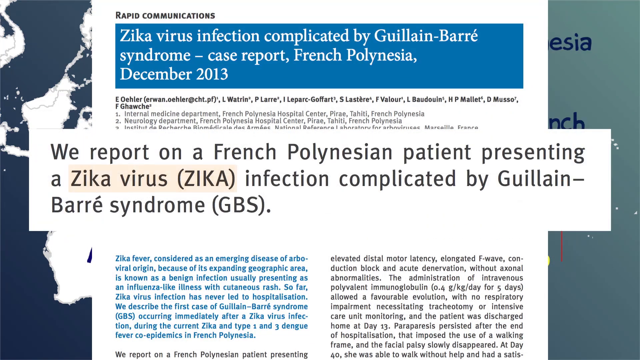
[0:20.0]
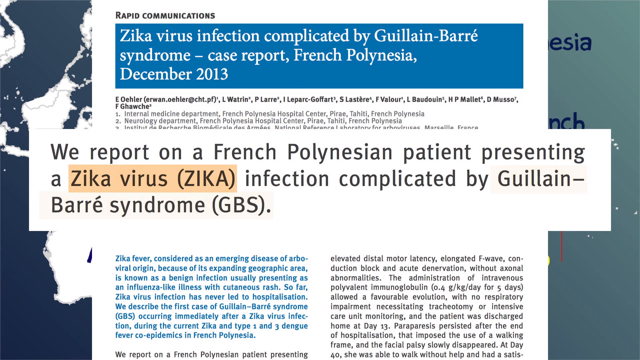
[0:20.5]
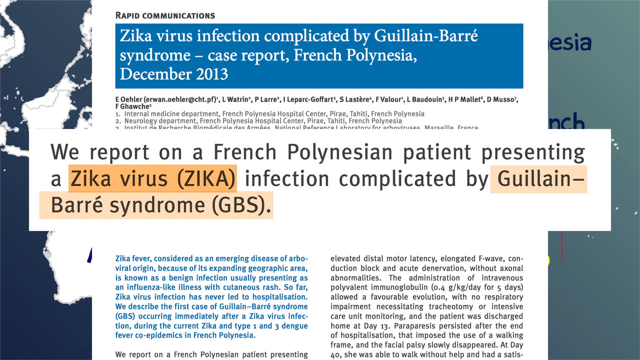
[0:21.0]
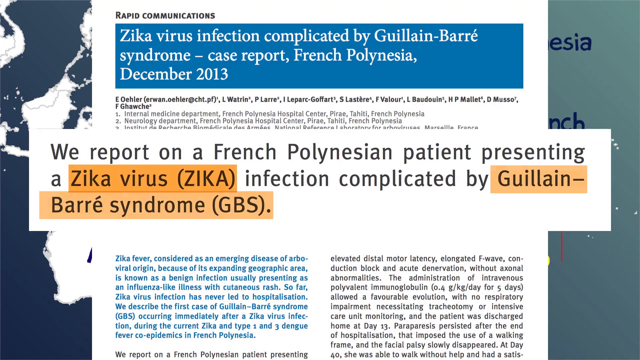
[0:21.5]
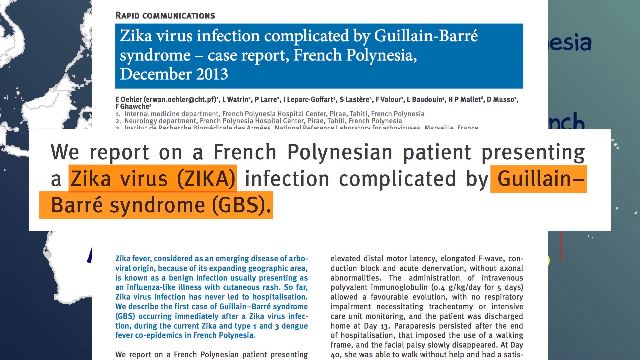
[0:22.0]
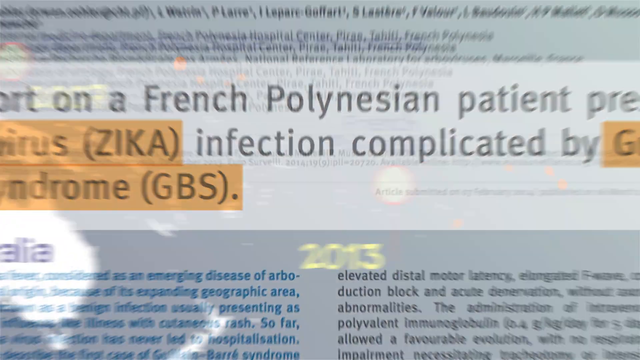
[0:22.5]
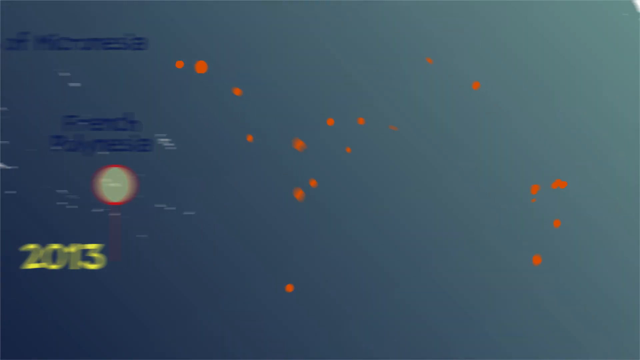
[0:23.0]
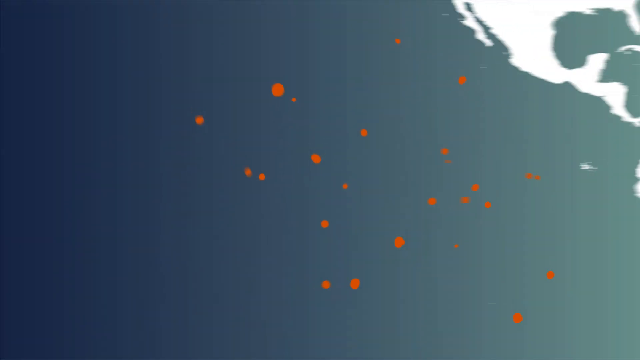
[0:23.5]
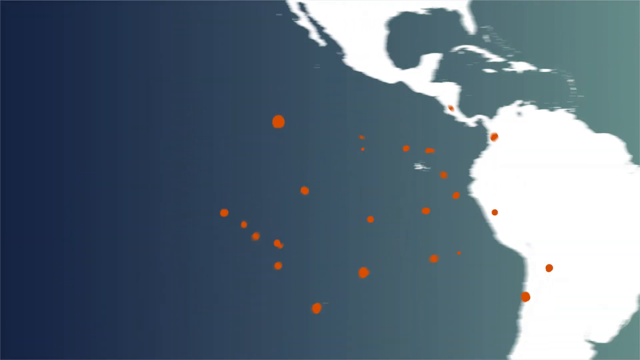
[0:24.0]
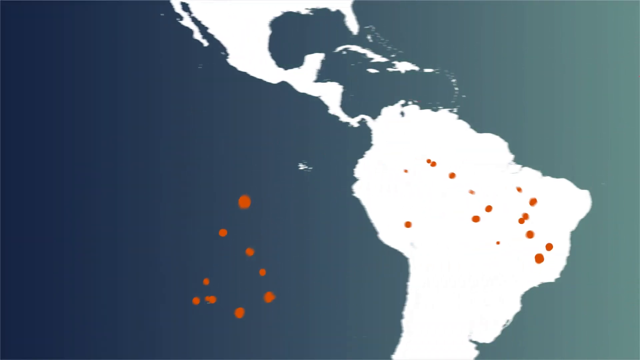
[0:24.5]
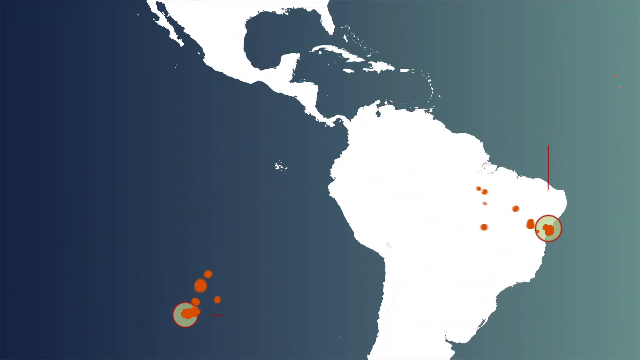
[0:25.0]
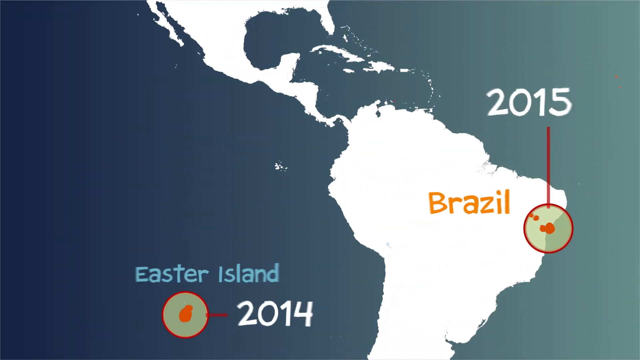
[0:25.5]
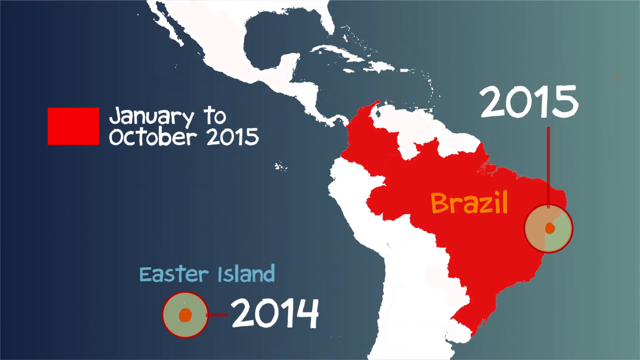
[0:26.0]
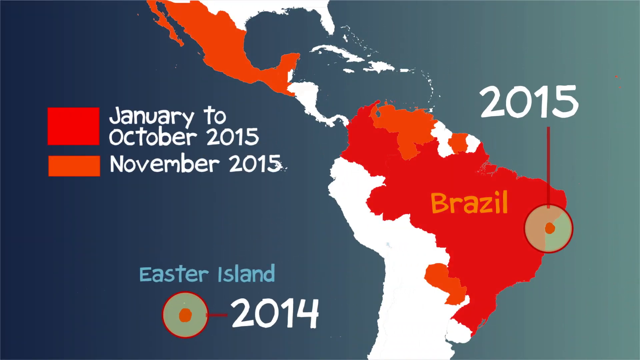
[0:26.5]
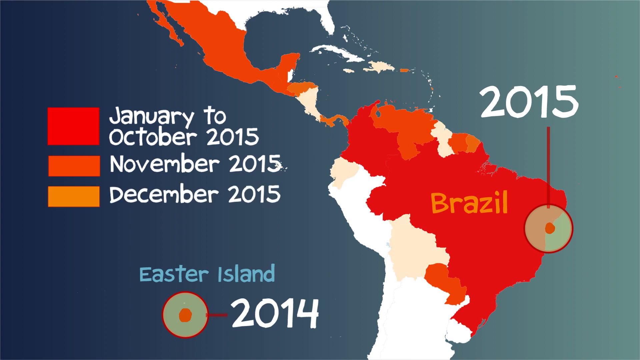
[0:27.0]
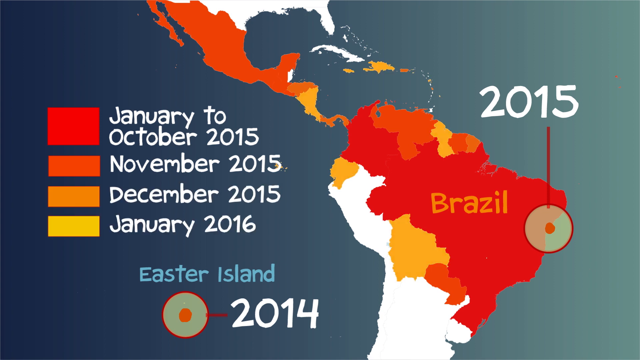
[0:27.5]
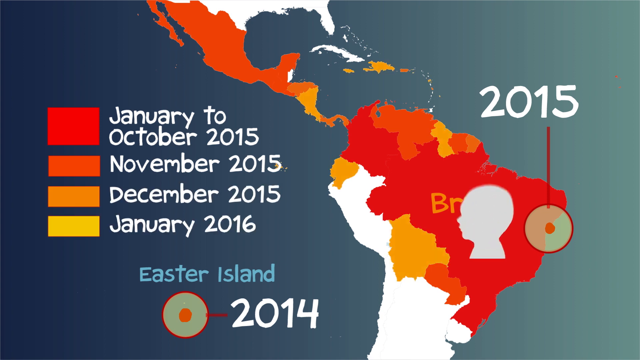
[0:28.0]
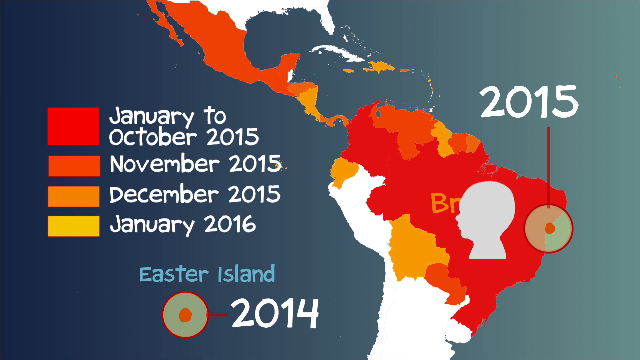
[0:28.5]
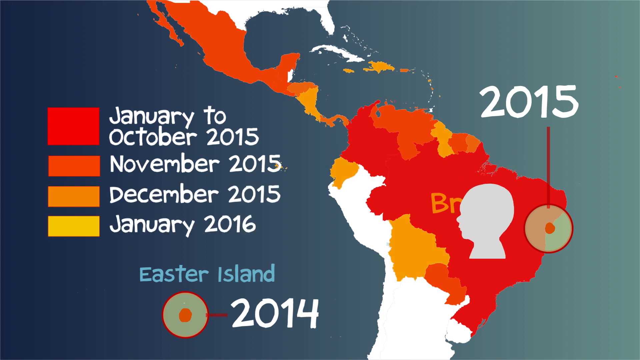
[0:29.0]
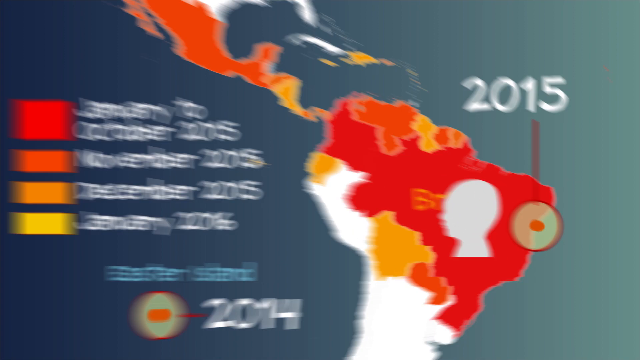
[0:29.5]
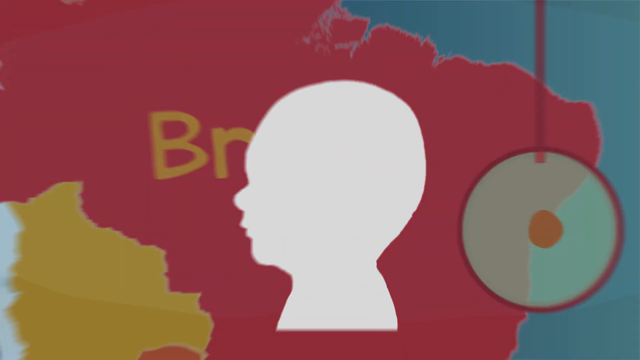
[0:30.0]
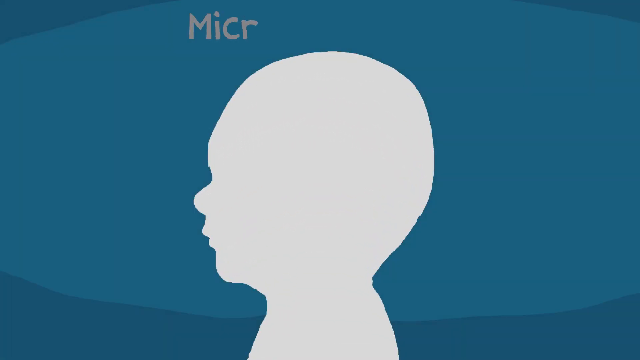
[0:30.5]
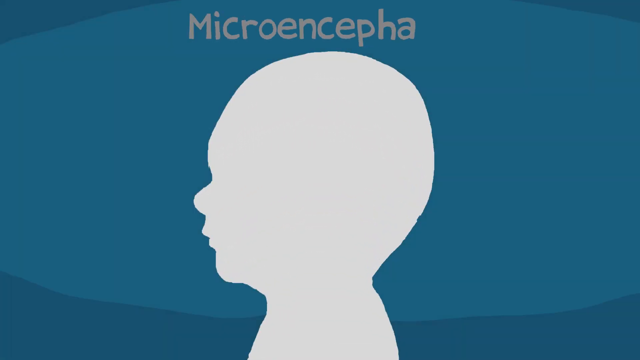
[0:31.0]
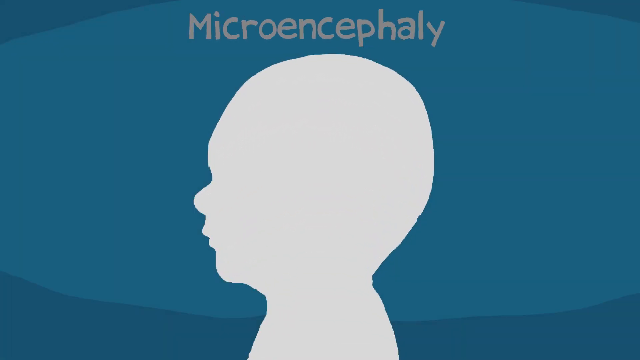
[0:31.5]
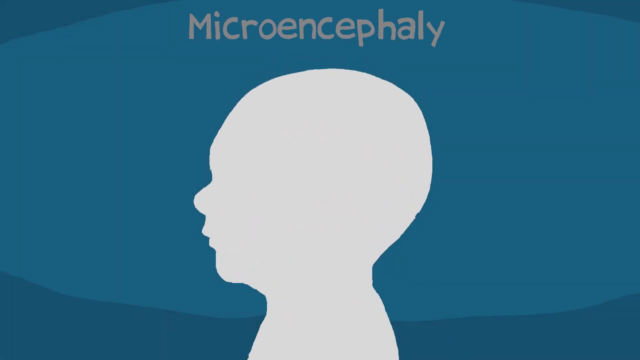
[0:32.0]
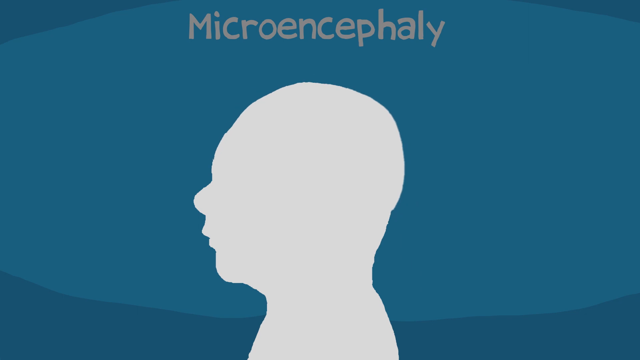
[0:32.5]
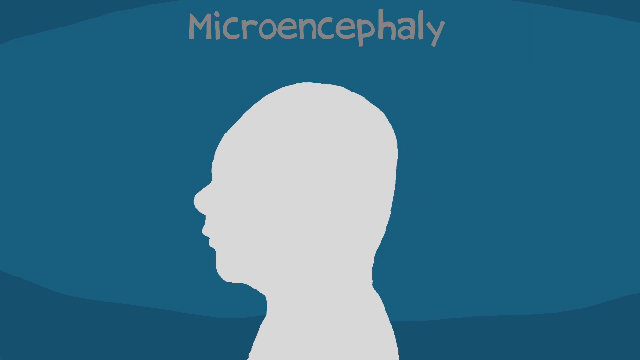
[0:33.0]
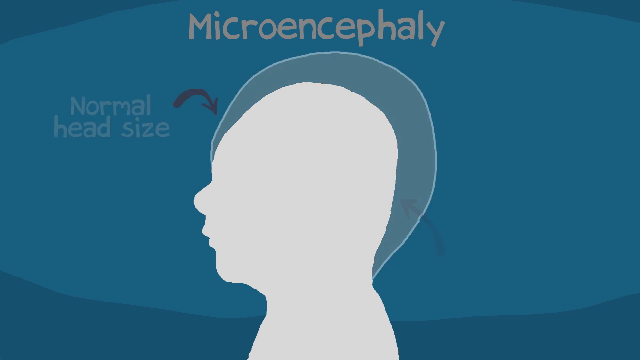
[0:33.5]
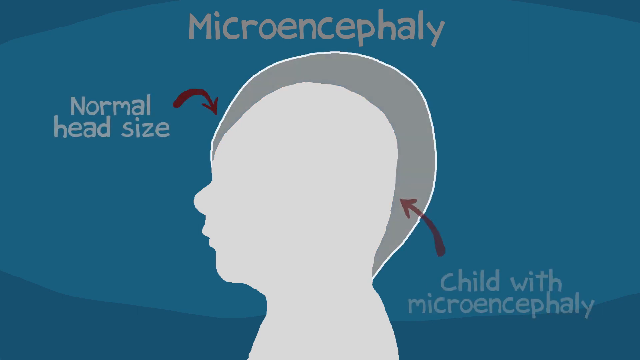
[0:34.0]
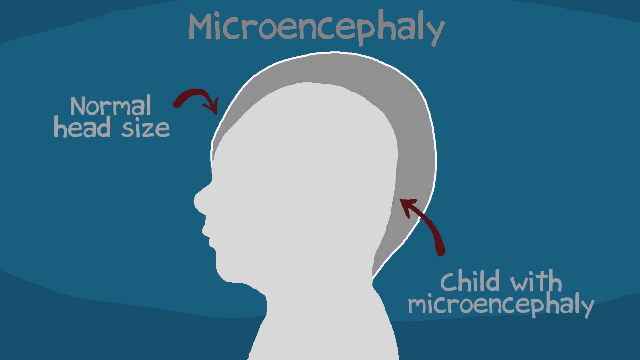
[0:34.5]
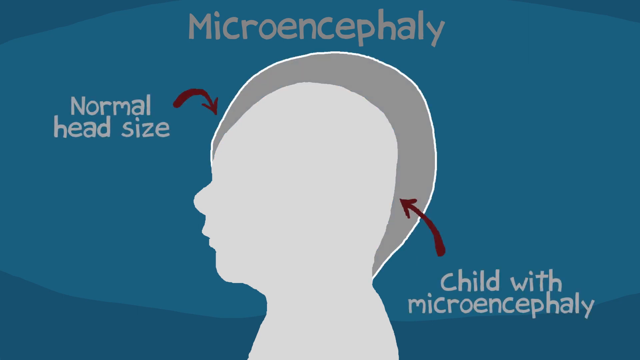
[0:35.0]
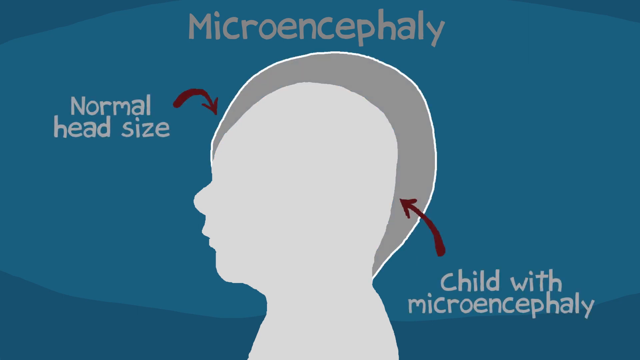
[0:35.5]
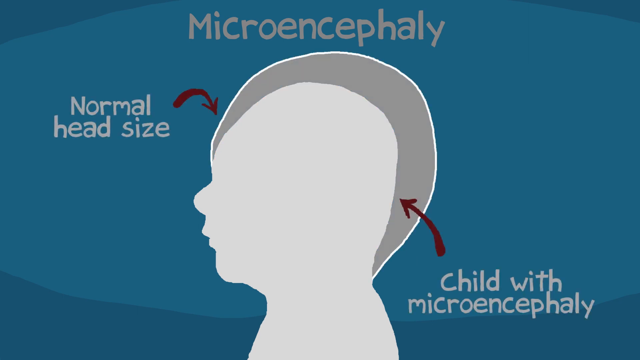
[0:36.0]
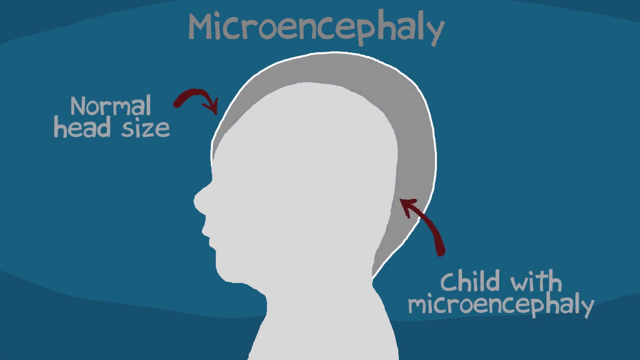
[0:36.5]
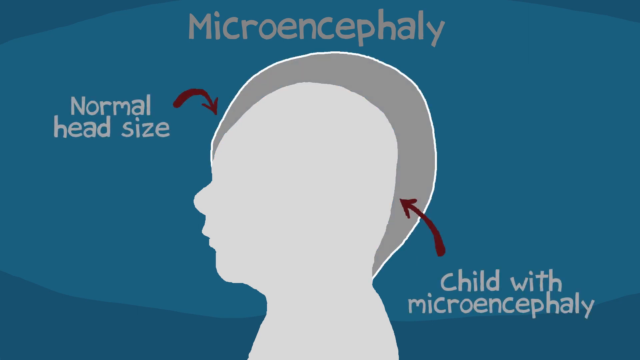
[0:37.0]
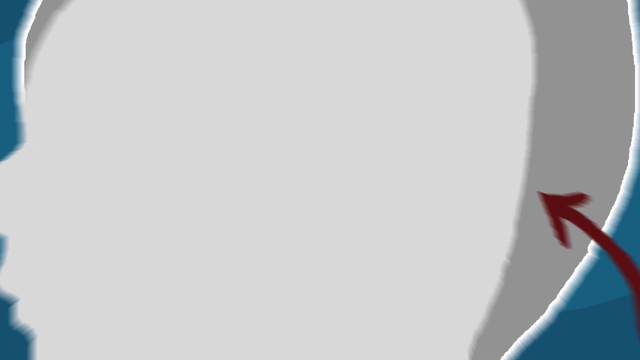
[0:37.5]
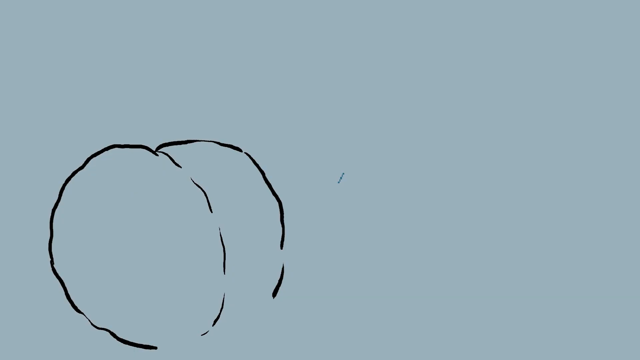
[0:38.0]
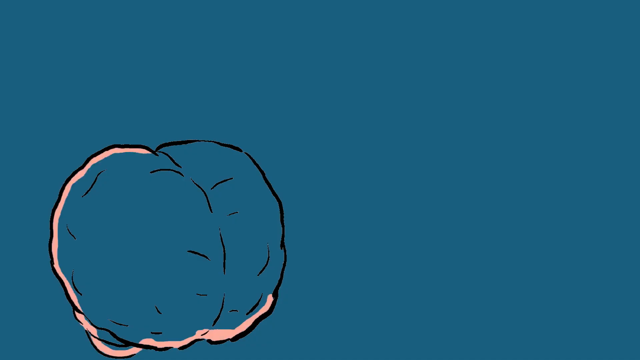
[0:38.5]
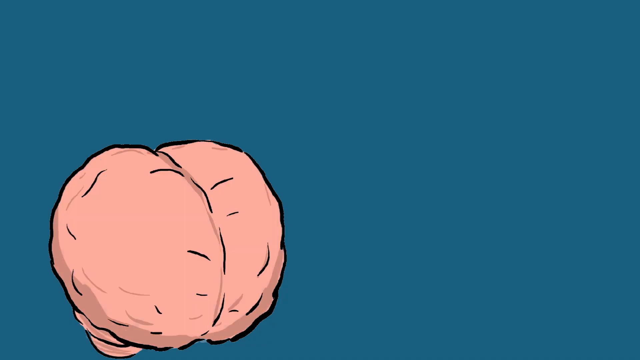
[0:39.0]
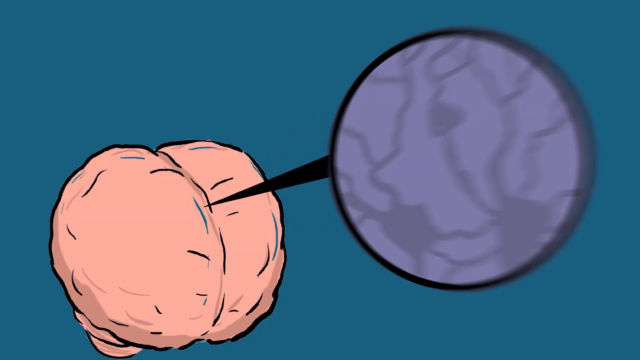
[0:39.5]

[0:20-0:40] The screen shows a map as the background, a full-height written report about Zika virus occupying the middle of the screen, and on top a horizontal white section of text reading "we report on a French-Polynesian patient presenting a Zika virus (ZIKA) infection complicated by Guillain-Barré syndrome (GBS)." Orange highlighter is drawn behind "Zika virus (ZKA)" and behind "Guillain-Barré syndrome GBS". The view zooms in as the screen becomes transparent, revealing the map behind, and the orange dots move across to the right as another white map, of South America, is brought in from the left. Orange lettering over South America reads "Brazil", and the orange dots settle in a cluster on the coastline, with a green circle with a red outline drawn around them and a vertical red line rising to white text reading "2015". At the bottom left of the map, dots cluster in the middle of the ocean with a green circle and red outline around them and a dash reading "2014"; above this, light blue writing says "Easter Island". Large sections of Brazil are painted red, and a colour code appears in the ocean to the left of South America with a red box reading "January to October 2015". Other parts of South America turn orange, identified in the key by an orange box reading "November 2015". Colouring extends into further areas in a lighter orange identified as "December 2015", and then yellow sections identified as "January 2016". A white silhouette of a child's head facing left appears over Brazil. The view zooms in on the white head against a black background as green writing appears at the top: "Microencephaly". The head reduces in size at the back and top. A drawing shows the area the larger head had occupied, with text on the left reading "normal head size" pointing at the larger area, and text at the bottom right reading "child with microencephaly" pointing at the smaller head, which is inset within the larger area, now filled in with a darker, greyer colouring. The scene fades from white to a blue background as a brain is drawn in black outline in the bottom left corner and filled in pink. A circle is created on the right of the screen with an arrow pointing at the centre of the brain; inside the circle is a purple colour with what appear to be veins drawn in darker purple.